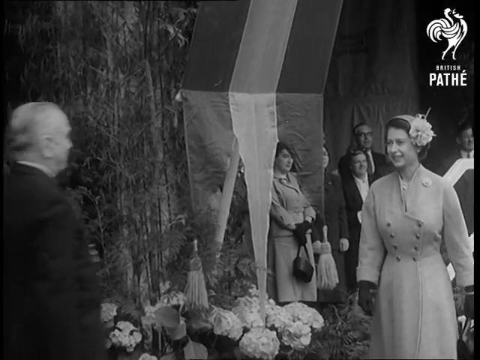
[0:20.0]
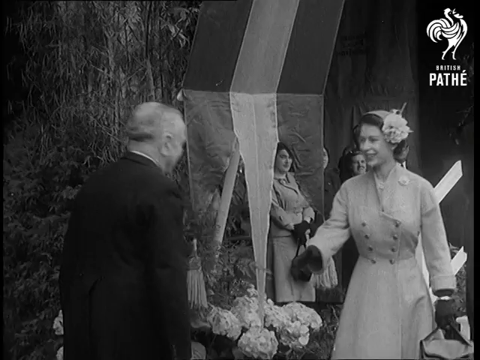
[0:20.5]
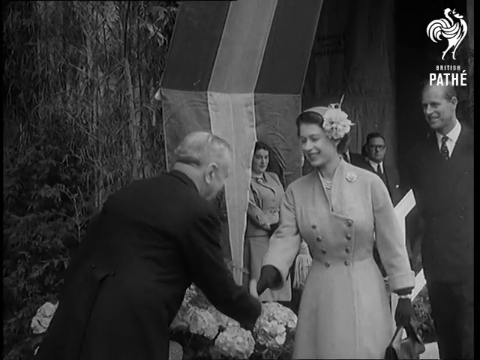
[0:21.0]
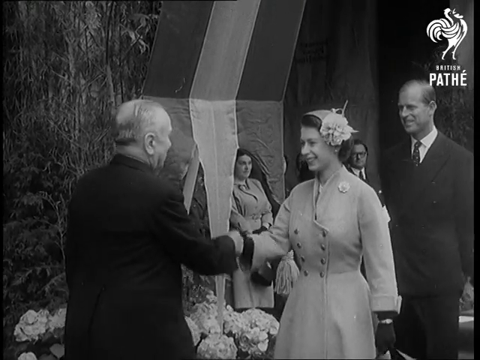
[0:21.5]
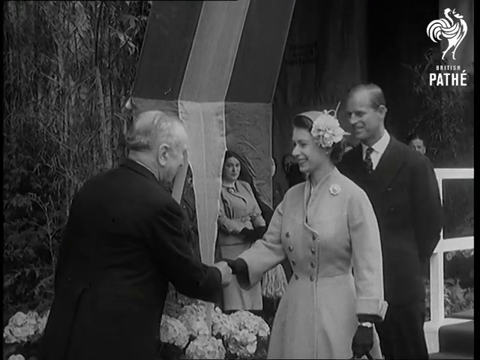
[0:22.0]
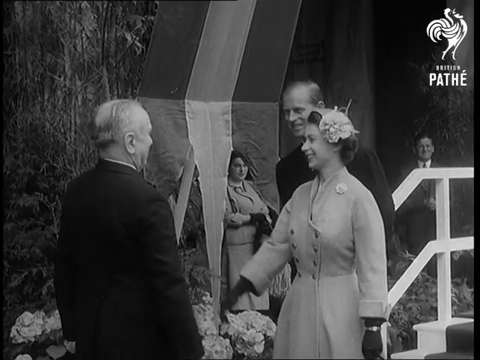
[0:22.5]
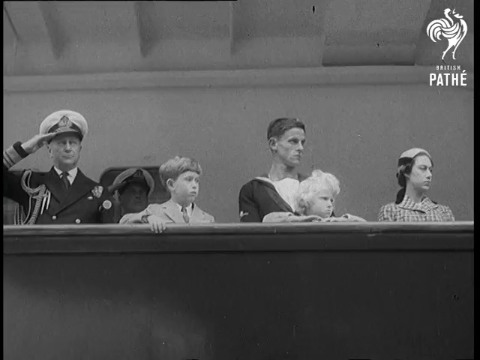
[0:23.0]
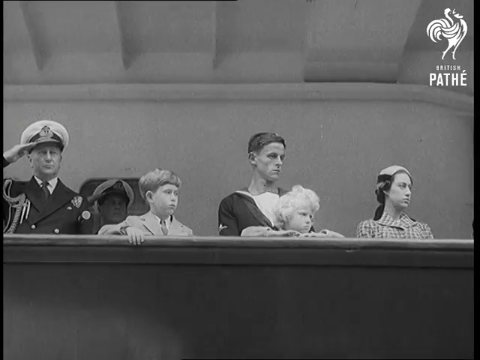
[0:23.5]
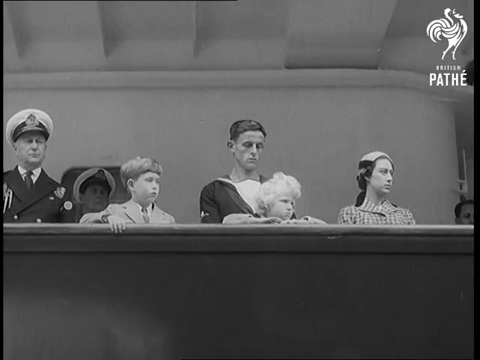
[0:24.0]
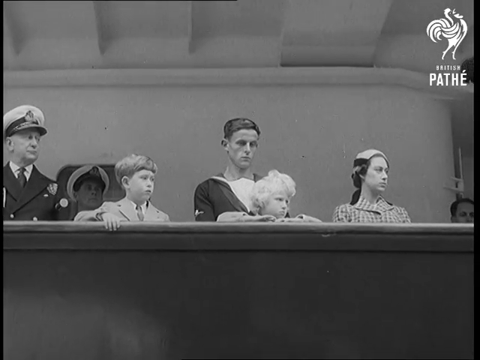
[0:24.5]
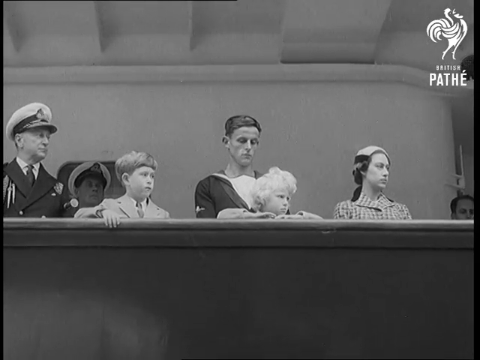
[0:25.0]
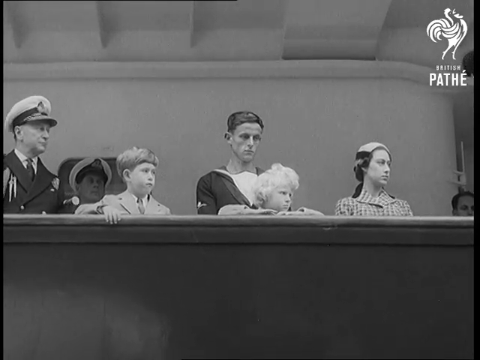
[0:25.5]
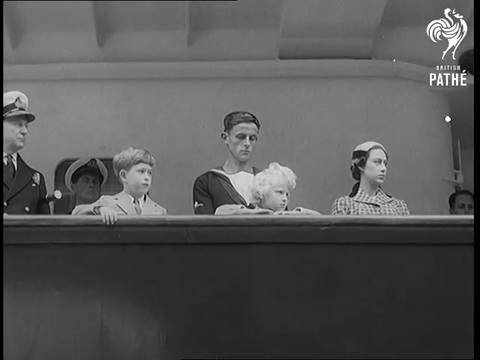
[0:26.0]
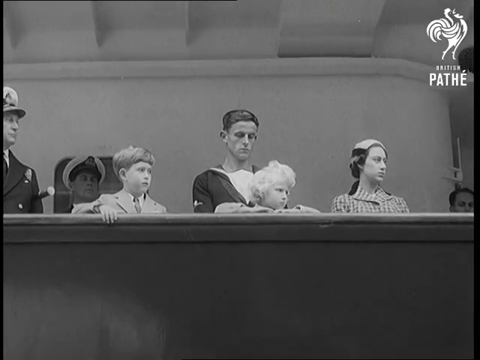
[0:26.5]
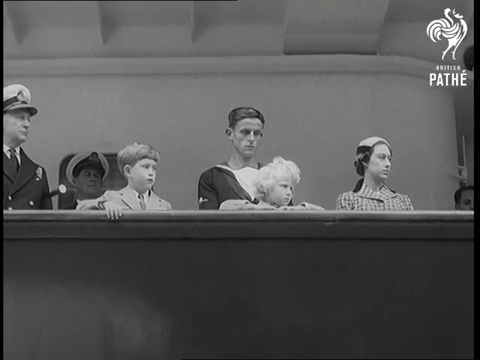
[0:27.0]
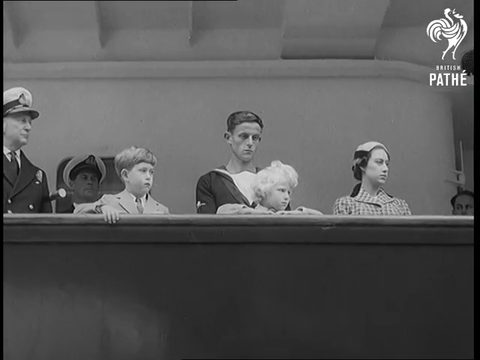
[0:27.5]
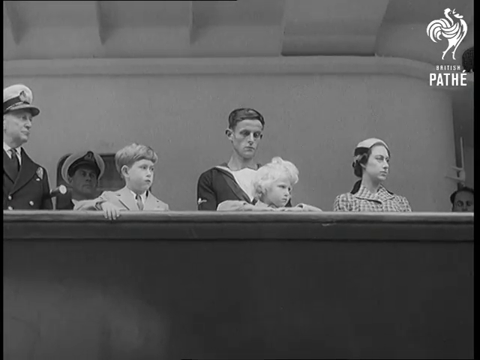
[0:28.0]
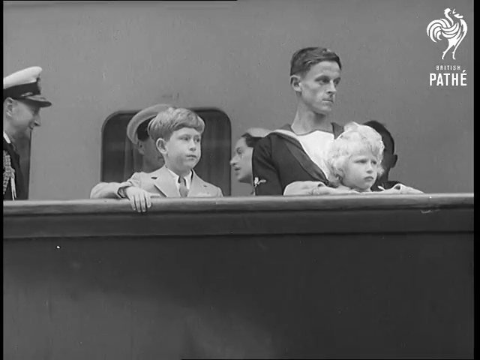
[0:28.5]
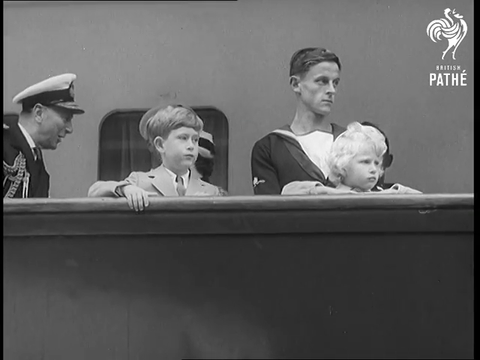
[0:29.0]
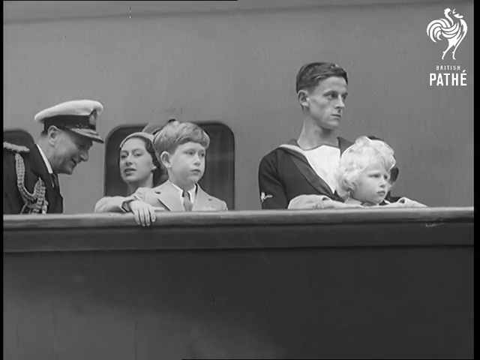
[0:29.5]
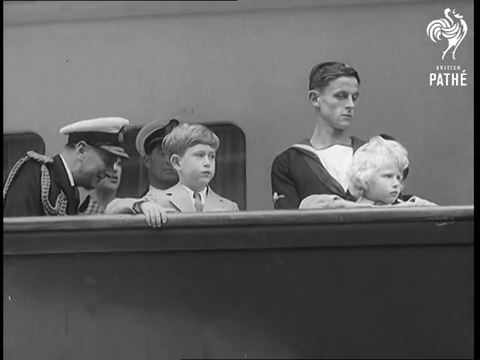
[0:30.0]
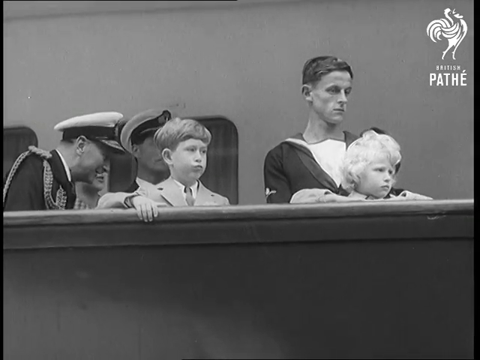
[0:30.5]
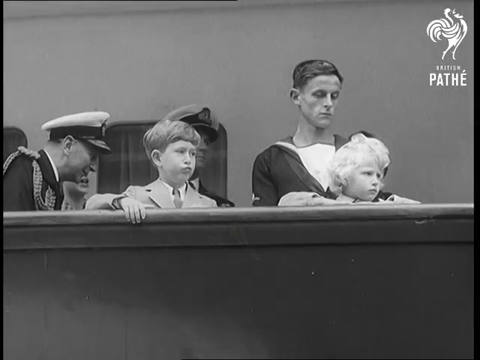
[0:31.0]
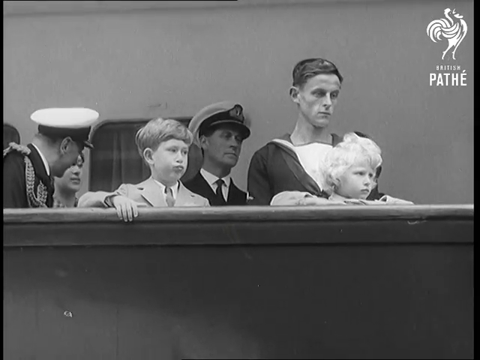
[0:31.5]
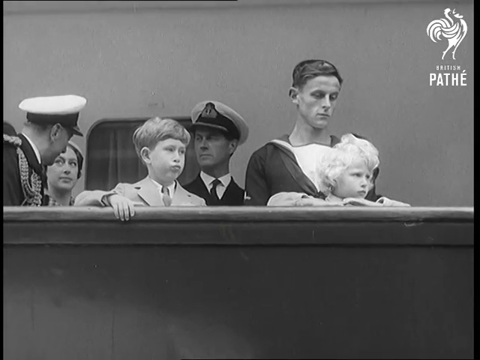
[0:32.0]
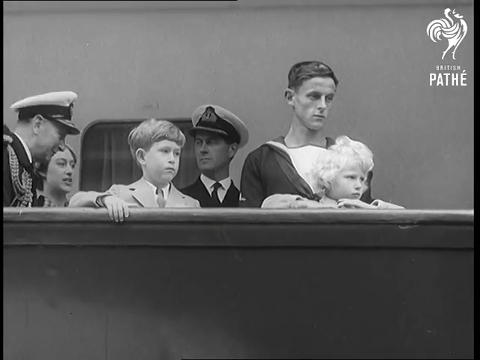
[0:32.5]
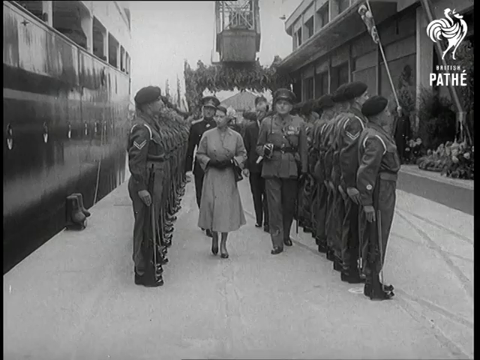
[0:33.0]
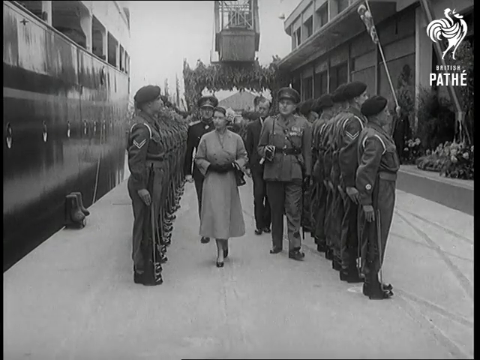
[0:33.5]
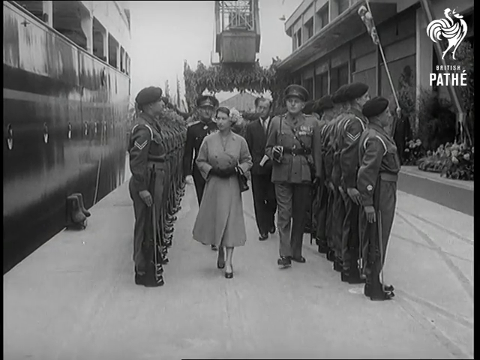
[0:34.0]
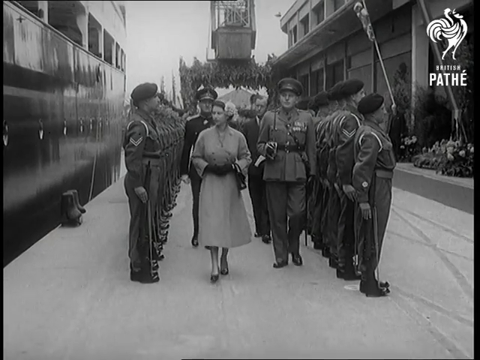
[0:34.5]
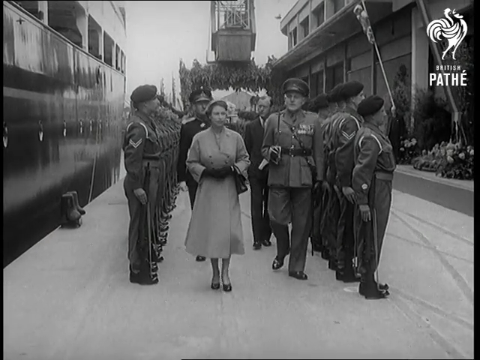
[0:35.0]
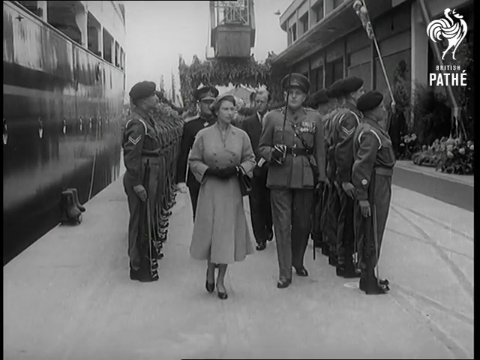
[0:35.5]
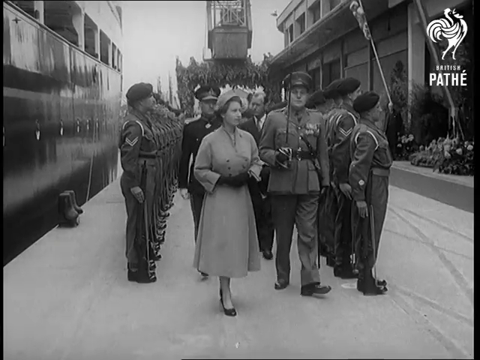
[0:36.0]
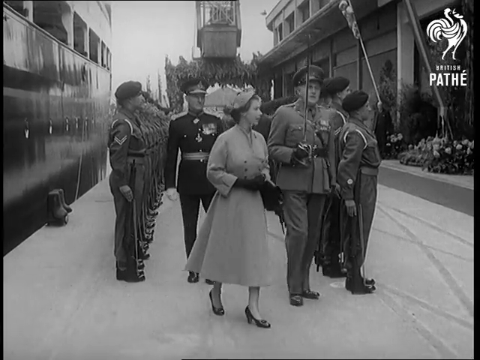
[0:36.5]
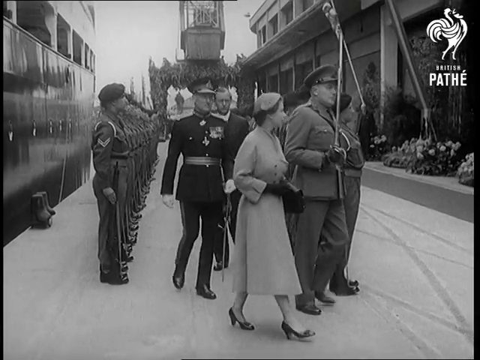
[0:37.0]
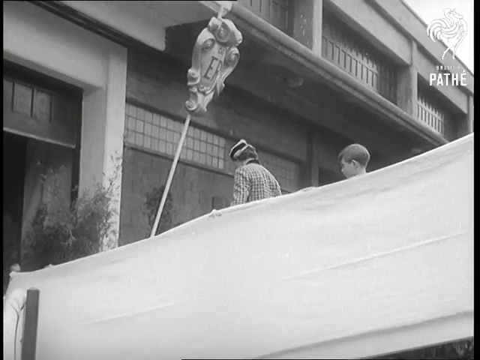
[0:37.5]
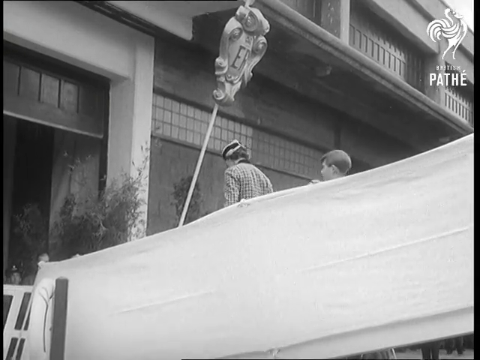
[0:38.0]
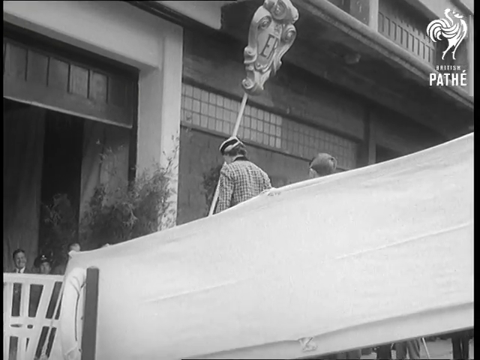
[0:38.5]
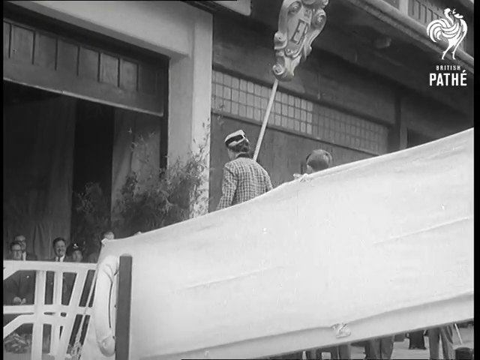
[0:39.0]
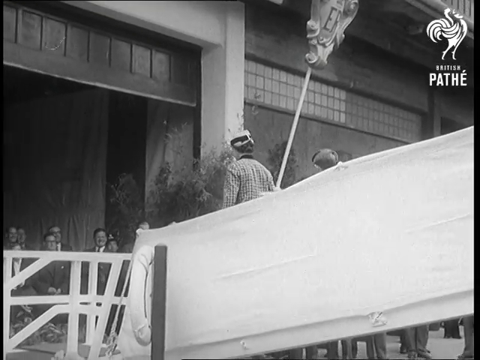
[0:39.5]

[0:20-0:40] An old man greets the Queen, who smiles and looks relatively pleased to see him. The camera then pans to the deck of the Royal Yacht Britannia, where there are a naval officer in uniform including his cap, a bareheaded sailor, and three children who are members of the Royal Family; one of them could be Prince Charles, and a small blonde-haired child could conceivably be Princess Anne. An older woman who has the look of a member of the Royal Family, possibly Princess Margaret, is also there. The children look quite serious, and the bareheaded sailor keeps a close eye on them. Back on the dockside, the Queen inspects an army guard of honour, walking between two lines of troops in khaki uniforms and dark berets, with an army officer wearing many medals standing next to her. After passing between the two lines of soldiers, they move off to the right of the frame. The rest of the Royal Party then comes down the gangplank.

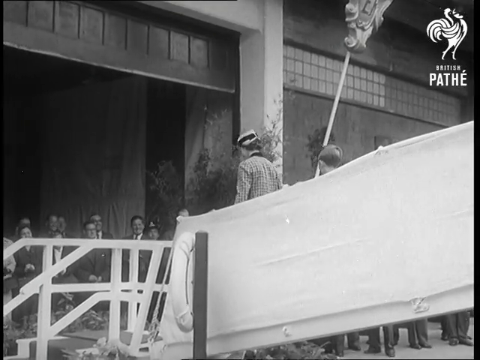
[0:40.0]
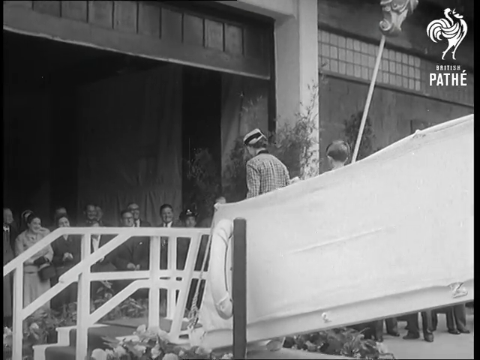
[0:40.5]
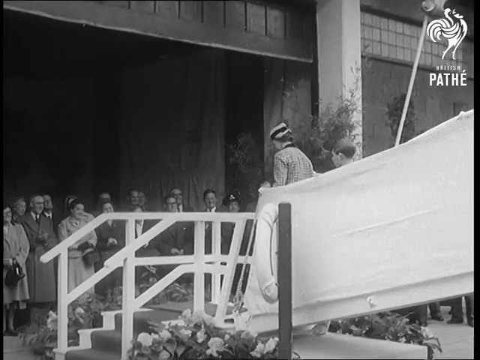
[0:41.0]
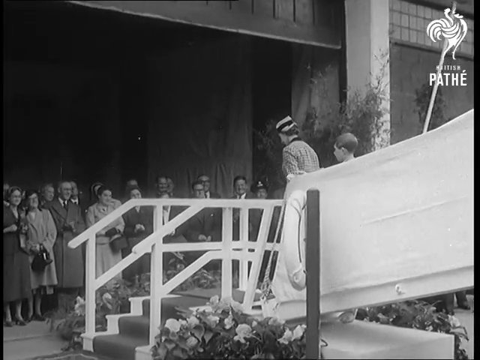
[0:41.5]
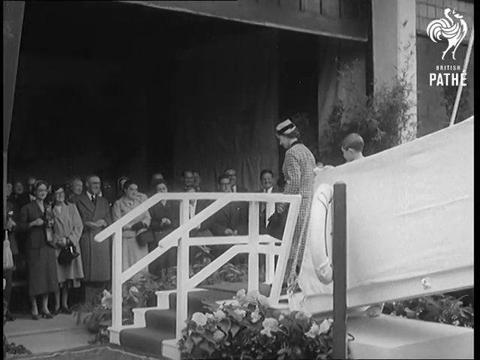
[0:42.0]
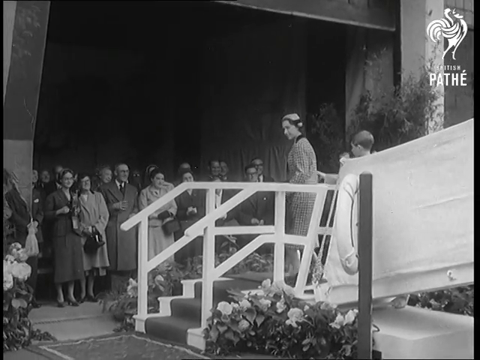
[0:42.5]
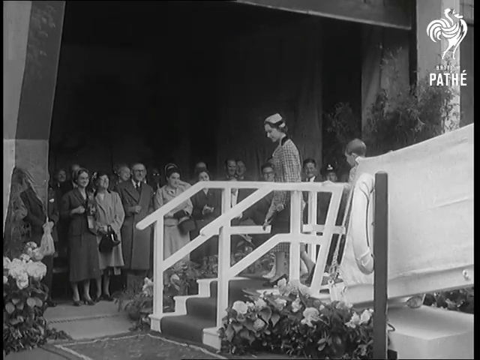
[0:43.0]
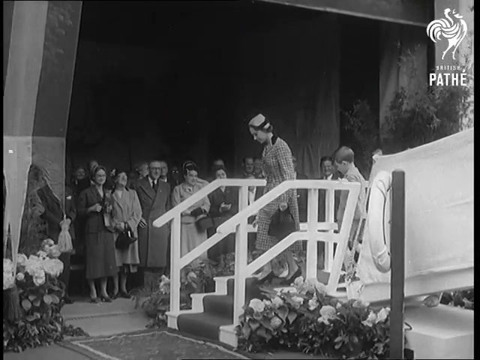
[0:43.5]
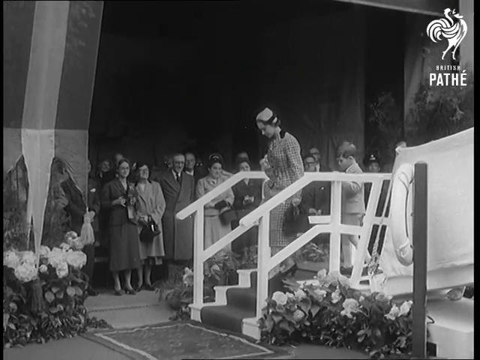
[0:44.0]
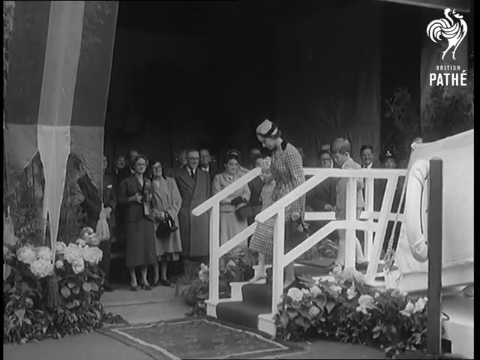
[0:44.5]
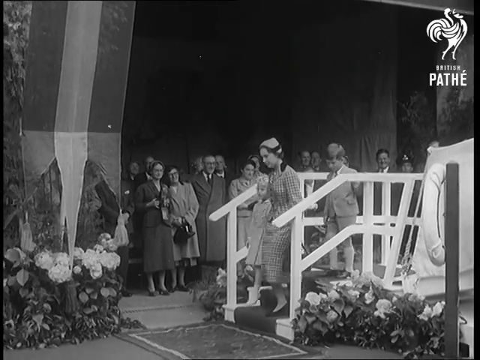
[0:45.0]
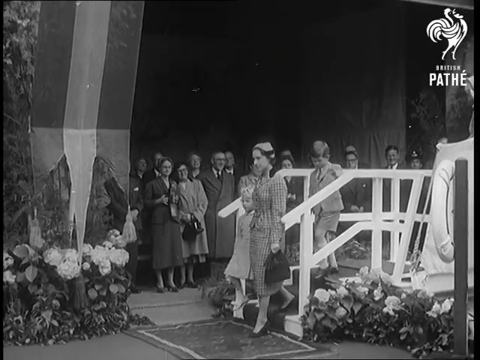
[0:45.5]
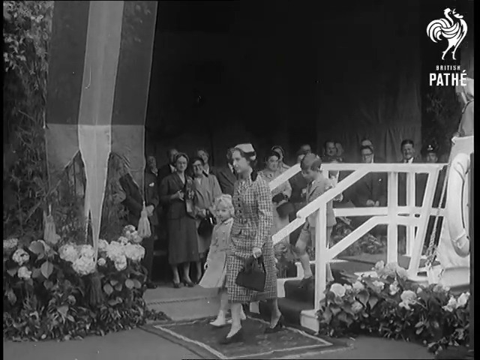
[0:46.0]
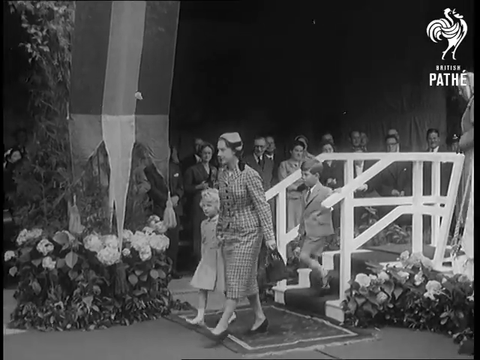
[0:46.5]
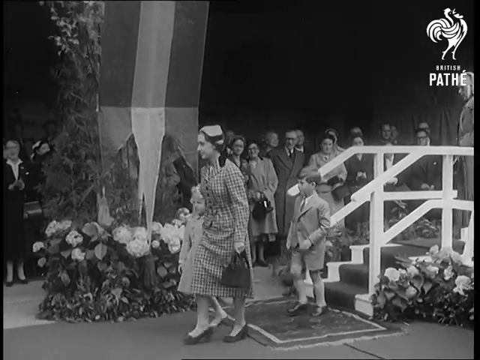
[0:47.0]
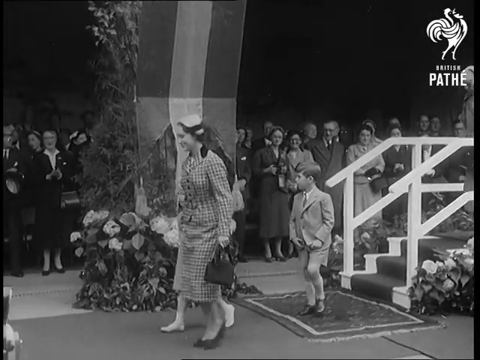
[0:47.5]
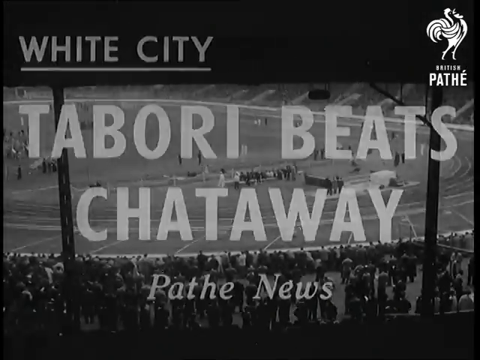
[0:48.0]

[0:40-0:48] The Royal Party continues descending the gangplank of the Royal Yacht Britannia while a group of men and women watch them come down the final steps. A boy who is apparently Prince Charles wears a smart suit with short trousers, fairly long socks reaching almost to his knees, and highly polished shoes. At the bottom of the gangplank there are flowers placed by the steps and a red carpet. The woman who may be Princess Margaret is with the two children, holding the hand of Princess Anne, while Charles walks behind them on his own. At the end they reach the dock and walk past more floral displays, admired by a crowd of largely elderly men and women. The newsreel then moves to another item, about Tabori beating Chataway, taking place at White City in London, showing a sports stadium with what appears to be an athletics track.